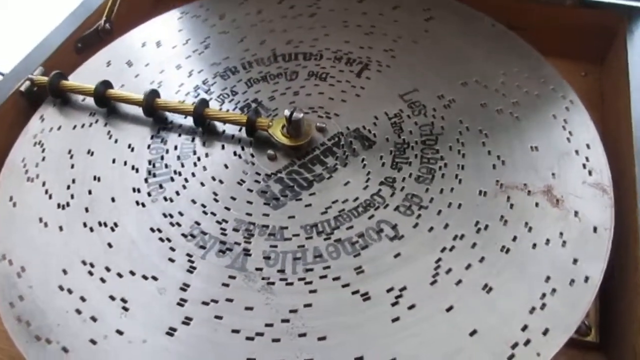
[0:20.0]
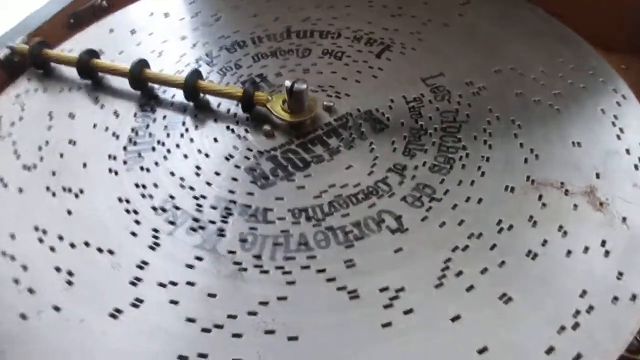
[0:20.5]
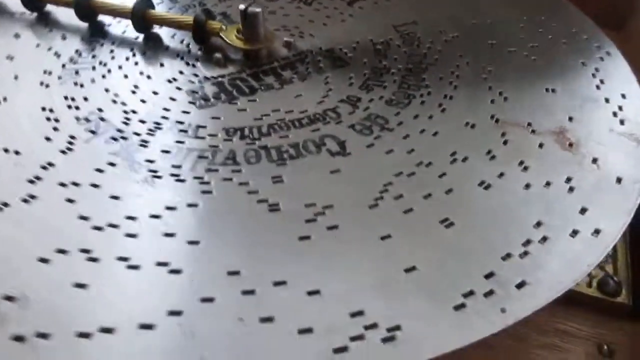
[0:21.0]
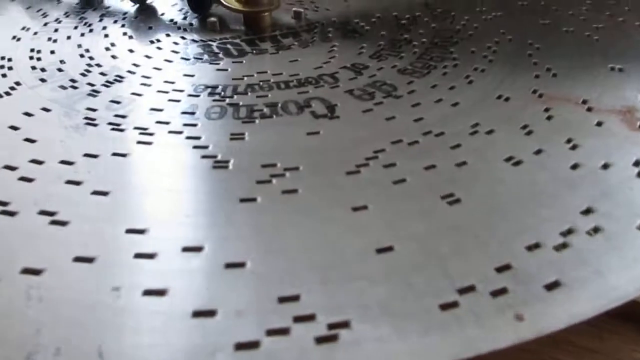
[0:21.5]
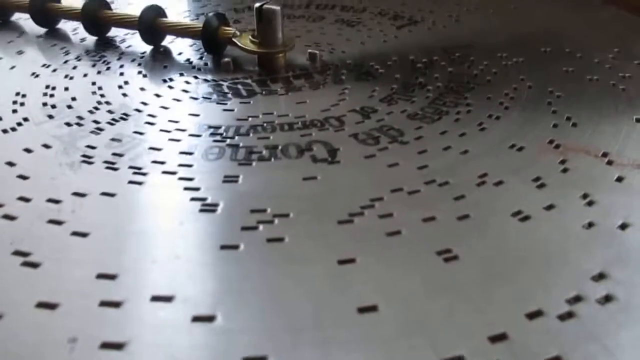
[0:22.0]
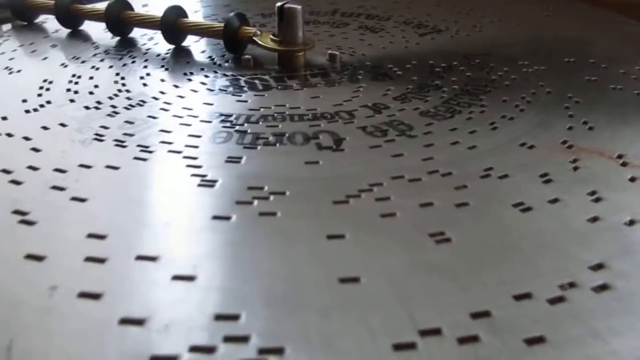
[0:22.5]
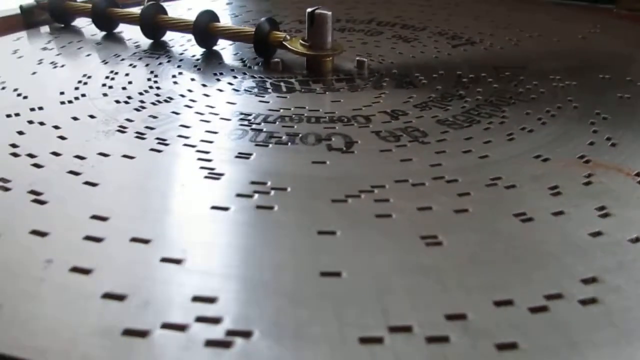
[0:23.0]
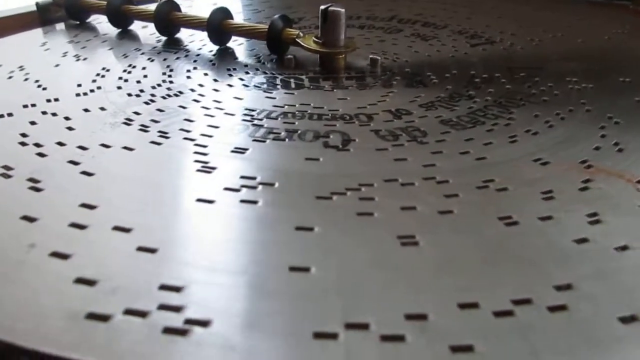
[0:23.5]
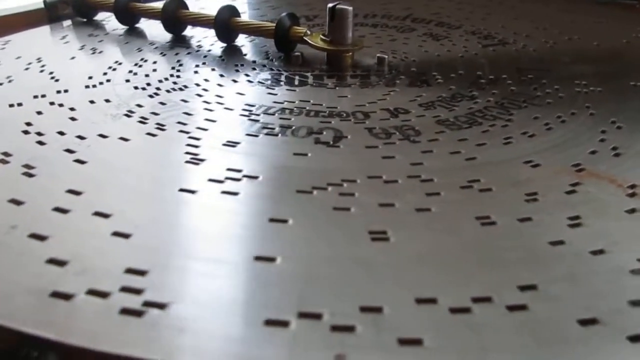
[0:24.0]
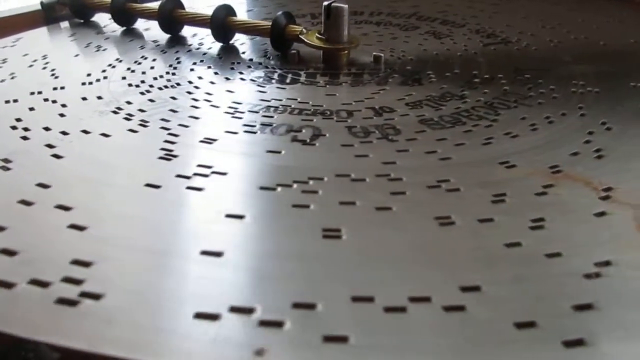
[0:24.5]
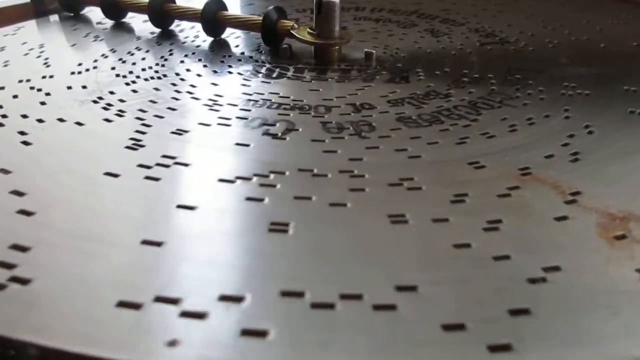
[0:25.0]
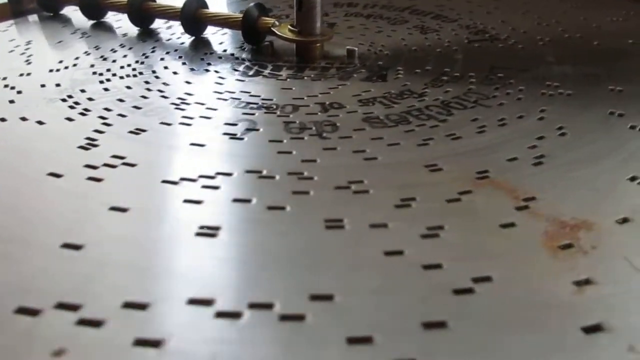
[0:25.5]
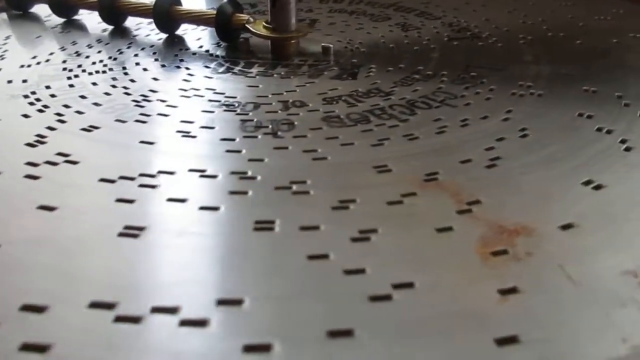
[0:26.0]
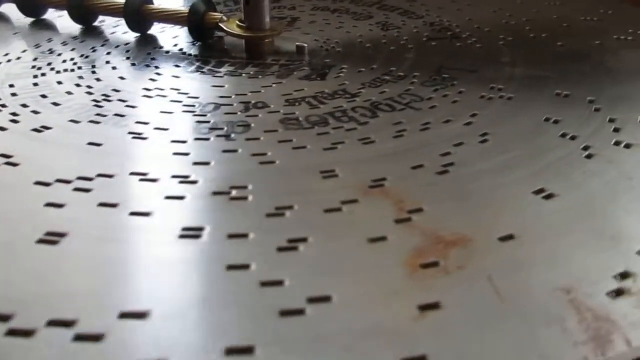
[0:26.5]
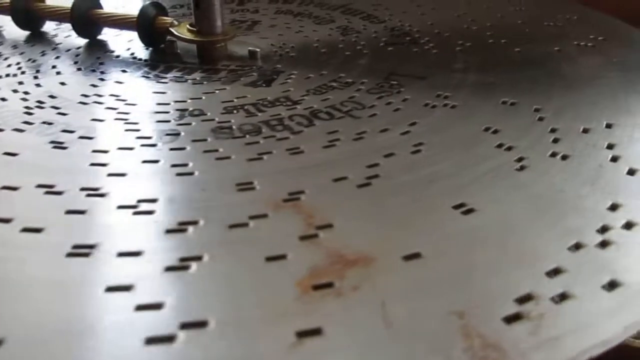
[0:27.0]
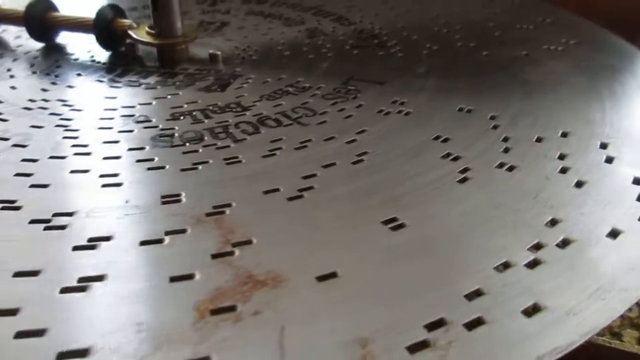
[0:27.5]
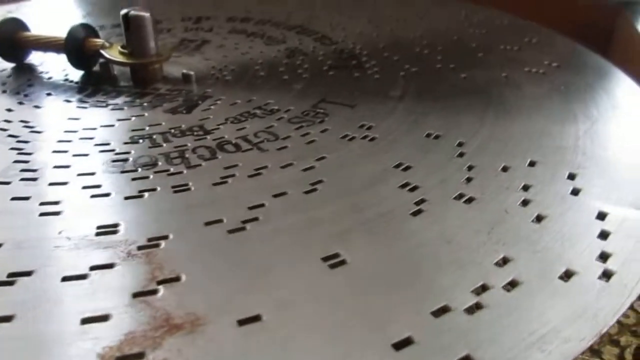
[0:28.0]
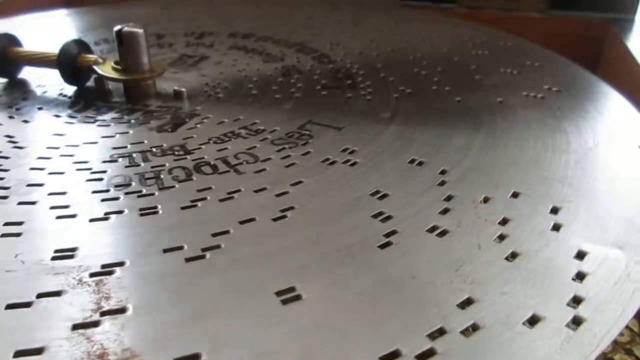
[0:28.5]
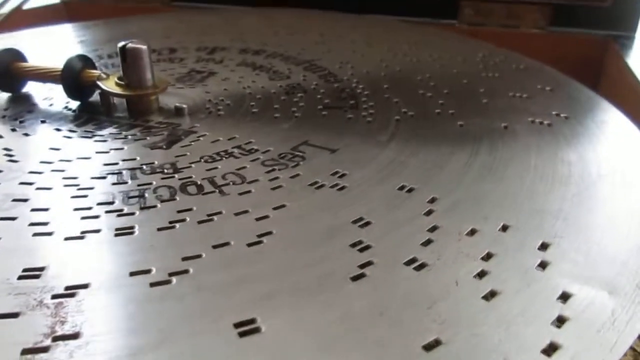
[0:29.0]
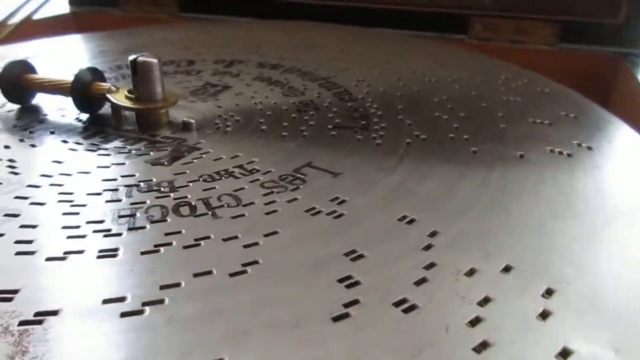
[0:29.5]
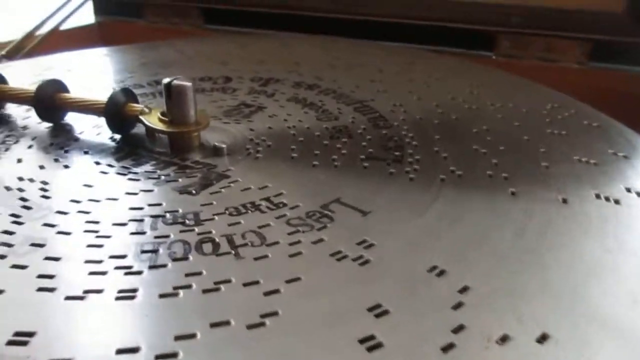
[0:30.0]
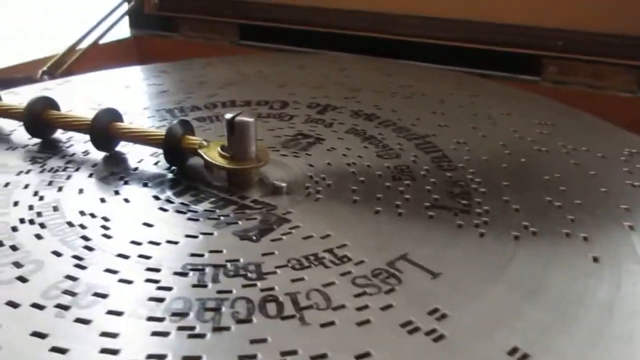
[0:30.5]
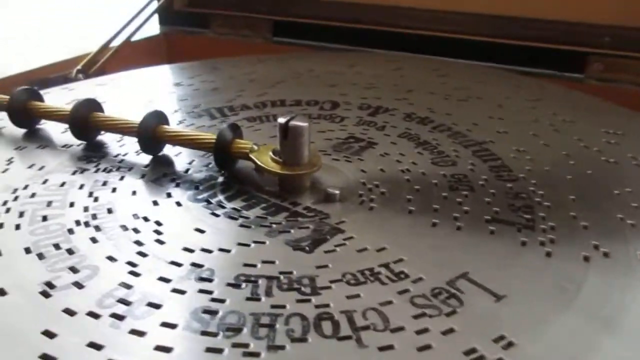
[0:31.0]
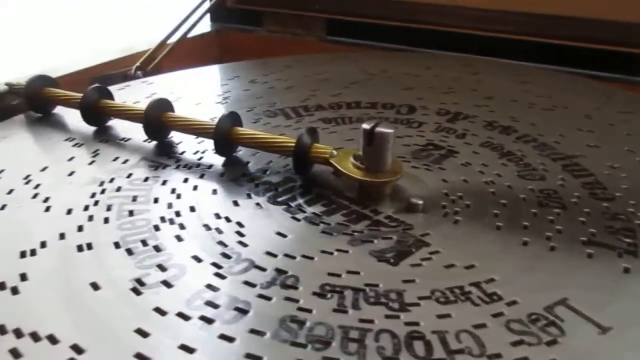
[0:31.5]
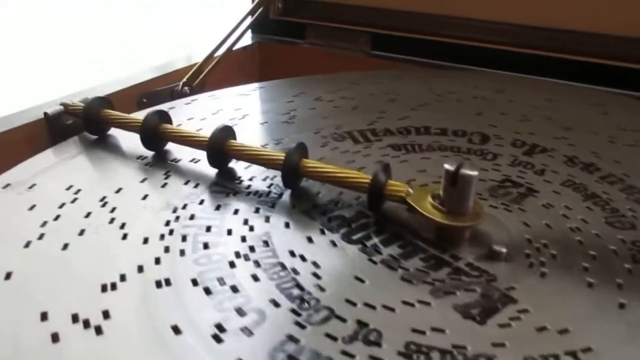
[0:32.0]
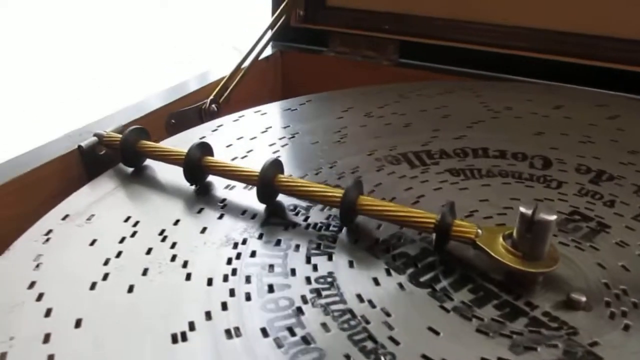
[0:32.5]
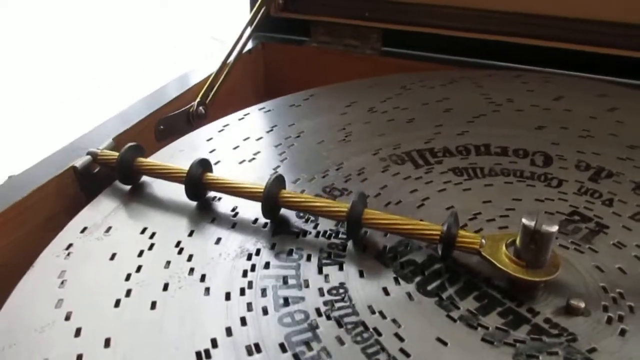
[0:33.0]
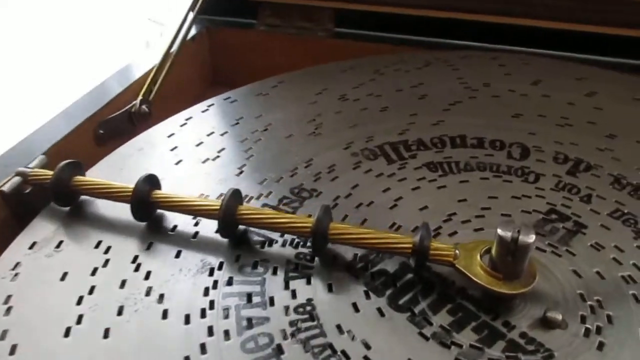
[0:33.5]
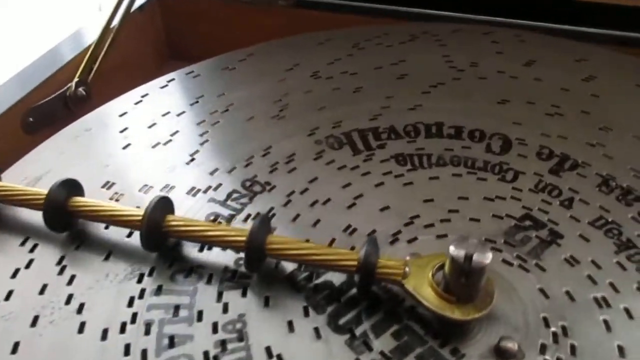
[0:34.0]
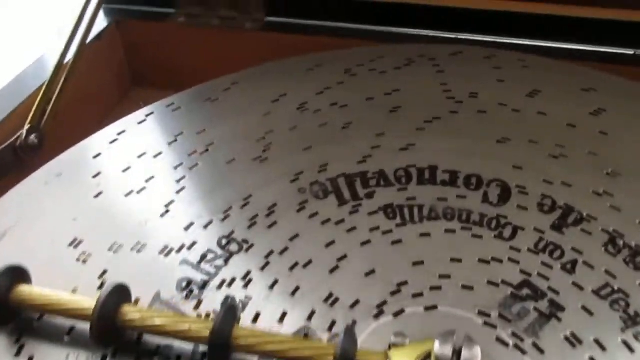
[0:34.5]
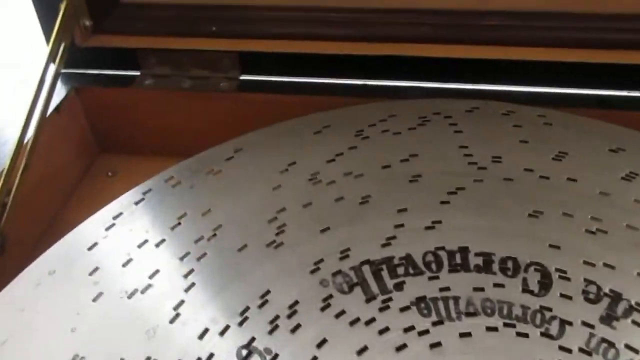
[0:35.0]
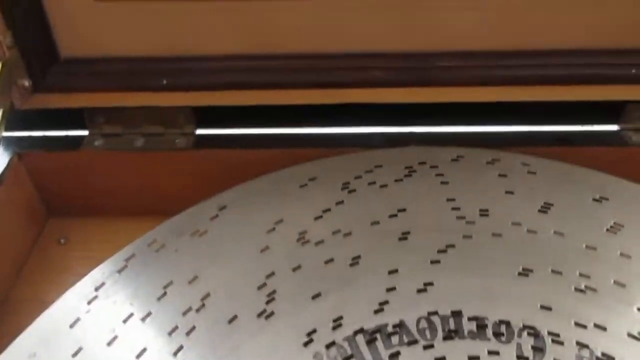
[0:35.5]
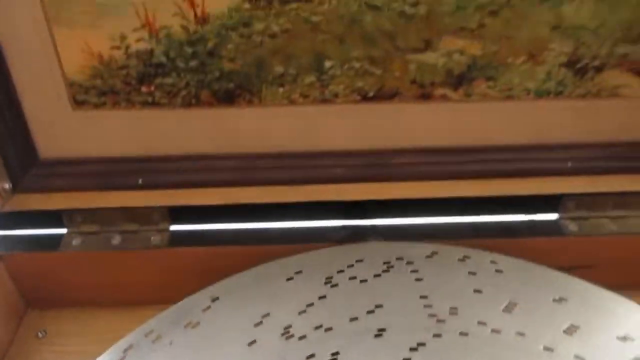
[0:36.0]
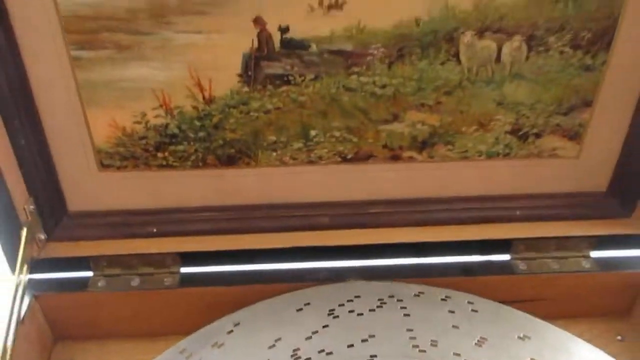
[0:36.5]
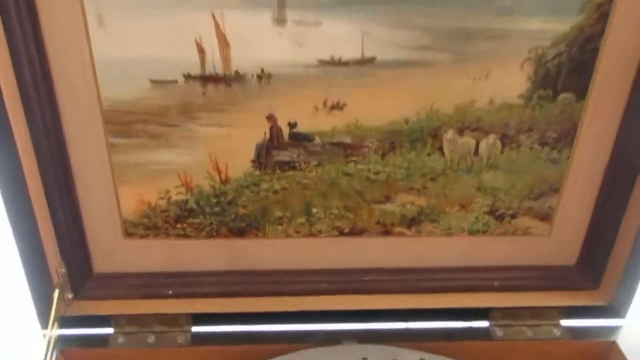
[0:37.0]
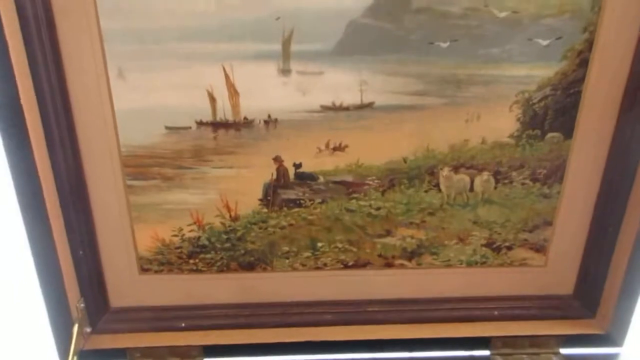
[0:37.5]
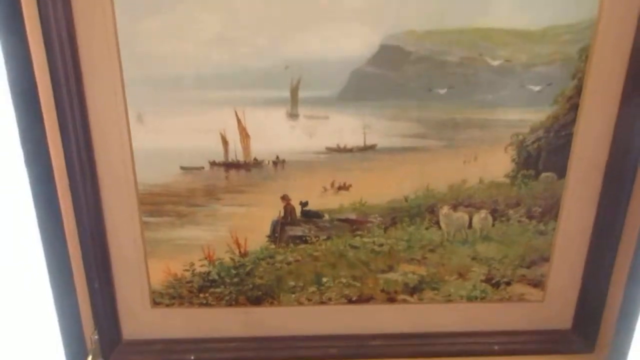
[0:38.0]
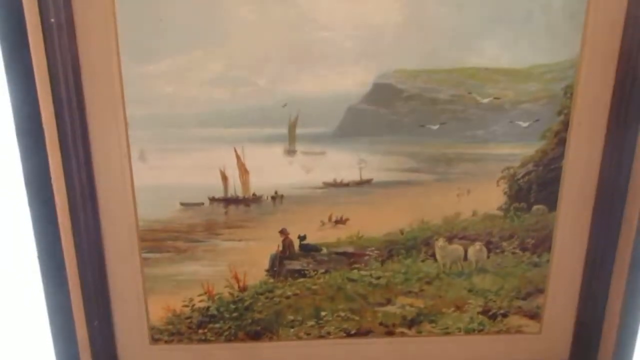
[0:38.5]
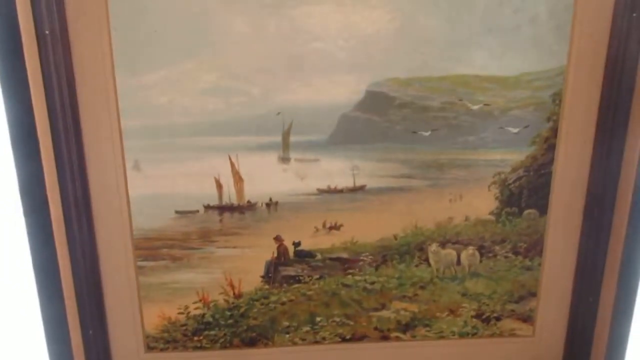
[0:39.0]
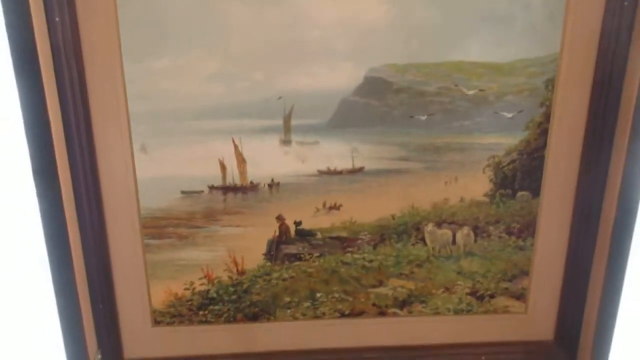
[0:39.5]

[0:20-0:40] A record player plays a flat, silver steel record. The record has black lettering printed on it and pinholes kind of poked throughout the metal in various sequences based on the layering, giving the sound as the metal rolls across it to play the music. The light brown interior of the box is visible, and the camera kind of swoops down to the level of the metal surface as the record spins and rotates, then pans up to show the light tan interior of the box. A gold-colored hinge holds up the open lid, which has a darker brown exterior. Painted on the interior of the lid is a beach scene with some people in boats, some animals kind of sitting in green grass, and a cliffside in the distance.